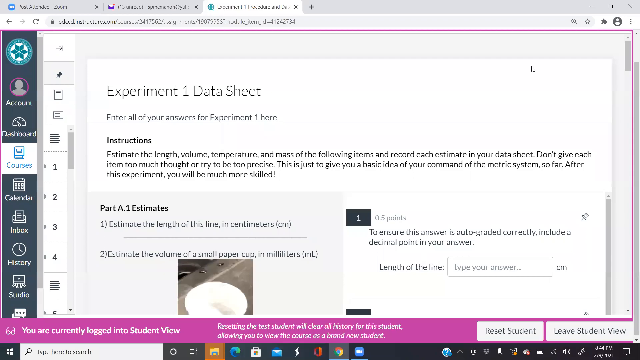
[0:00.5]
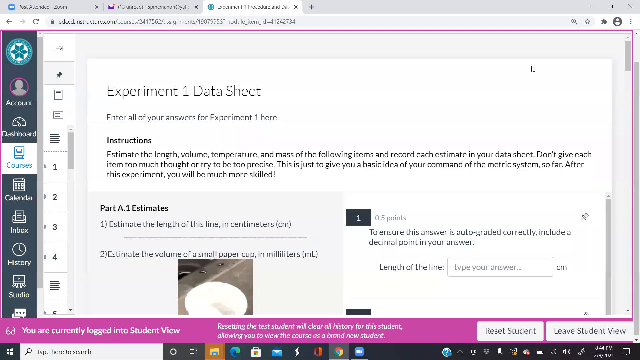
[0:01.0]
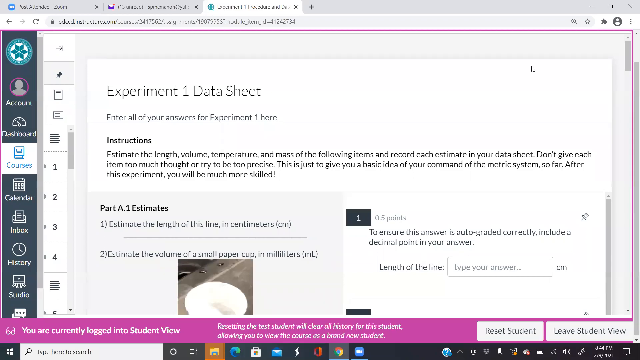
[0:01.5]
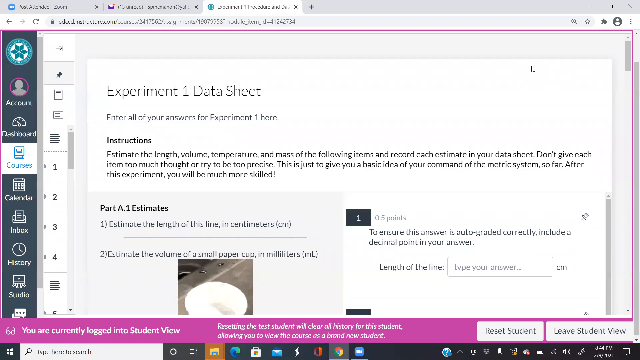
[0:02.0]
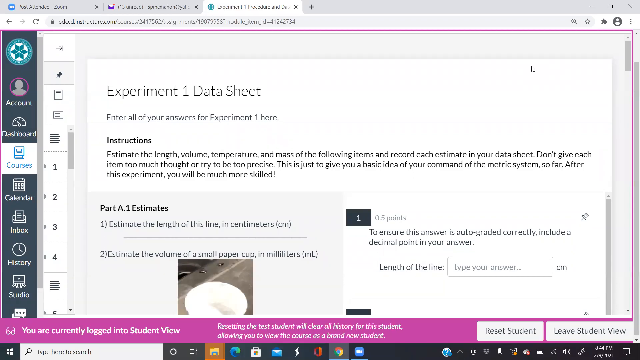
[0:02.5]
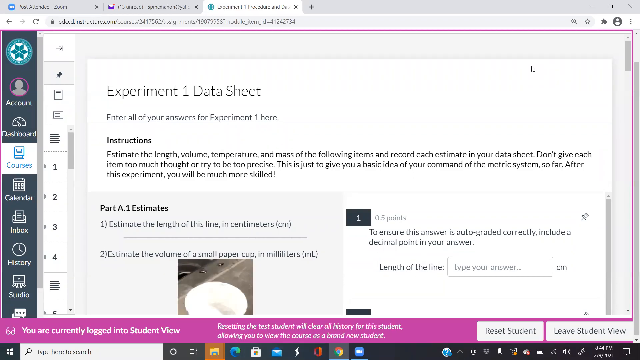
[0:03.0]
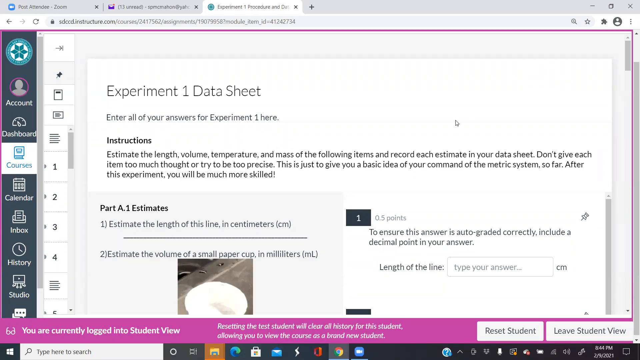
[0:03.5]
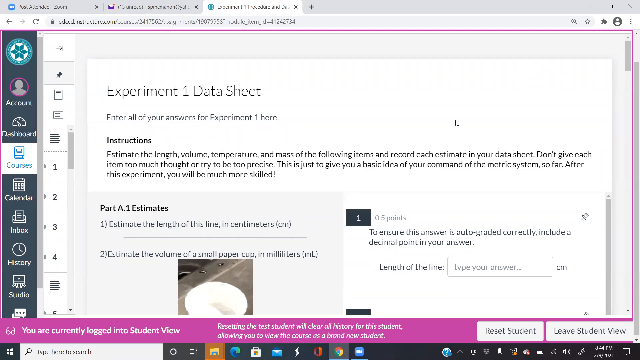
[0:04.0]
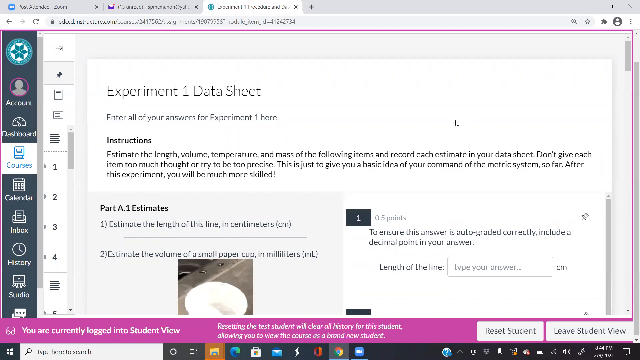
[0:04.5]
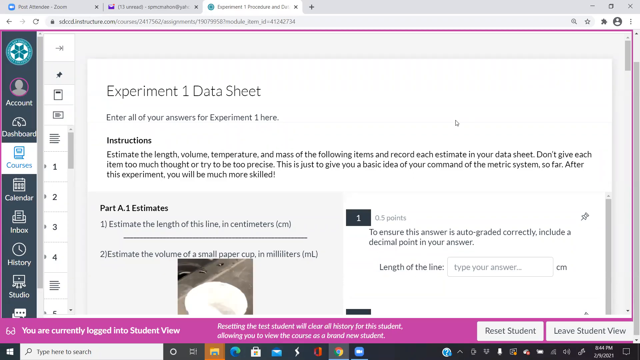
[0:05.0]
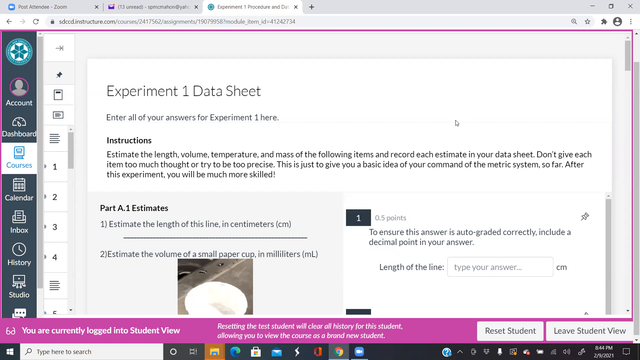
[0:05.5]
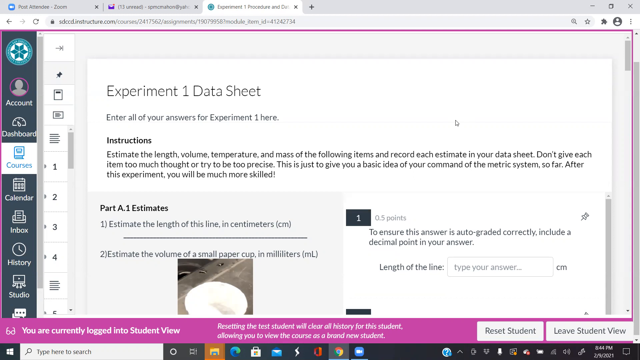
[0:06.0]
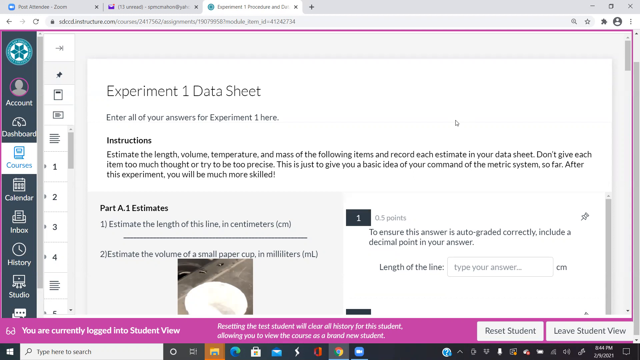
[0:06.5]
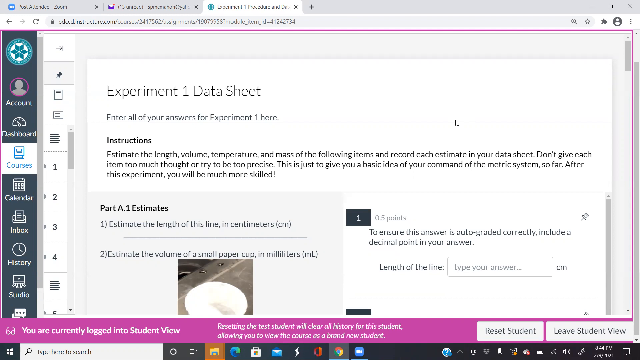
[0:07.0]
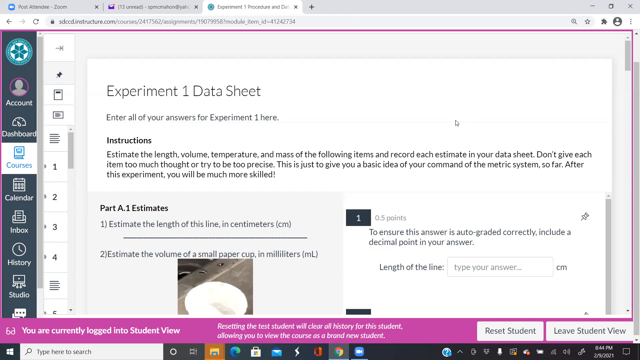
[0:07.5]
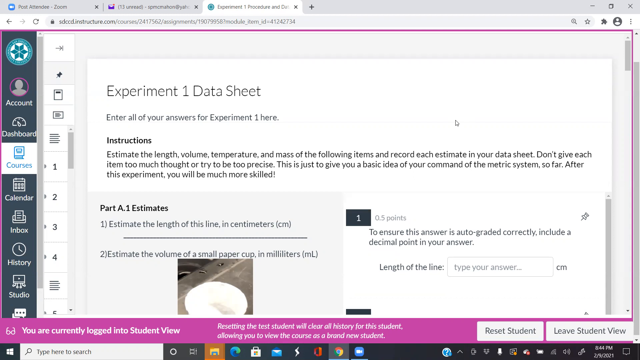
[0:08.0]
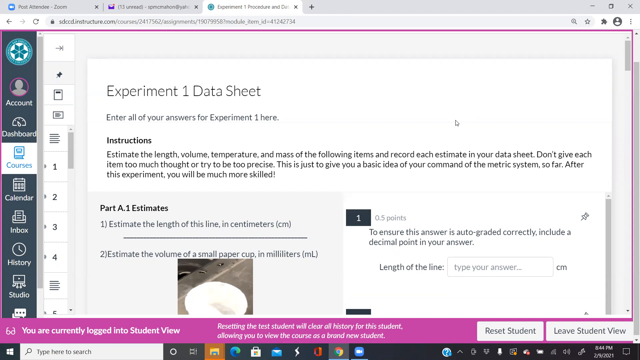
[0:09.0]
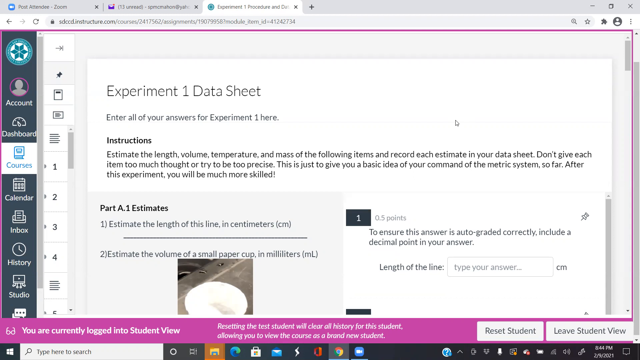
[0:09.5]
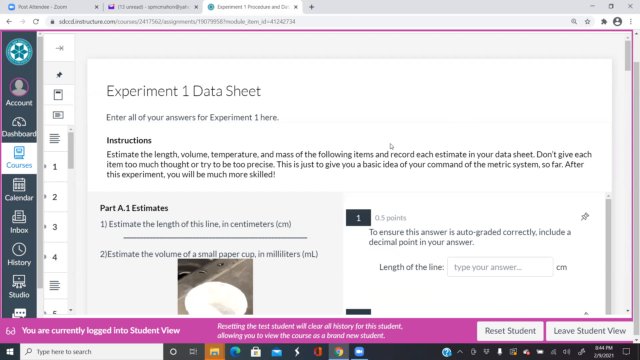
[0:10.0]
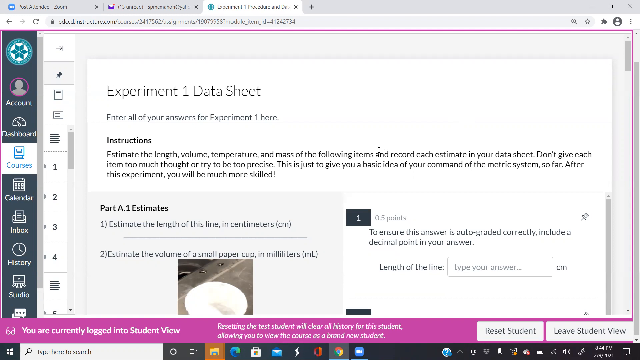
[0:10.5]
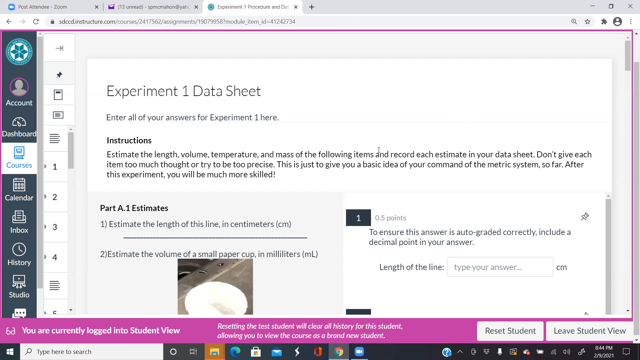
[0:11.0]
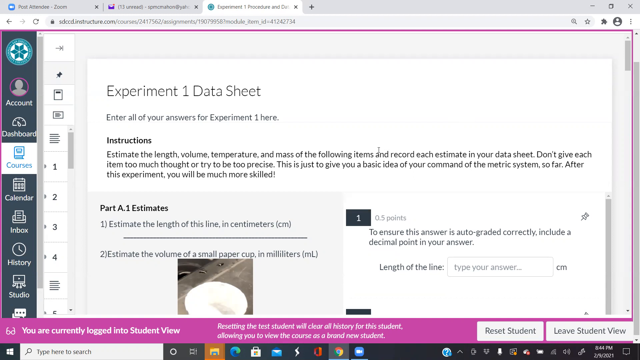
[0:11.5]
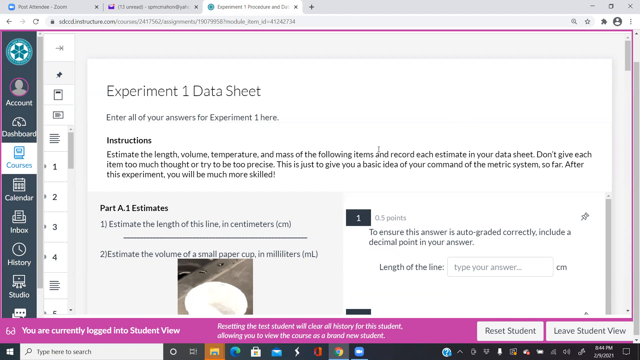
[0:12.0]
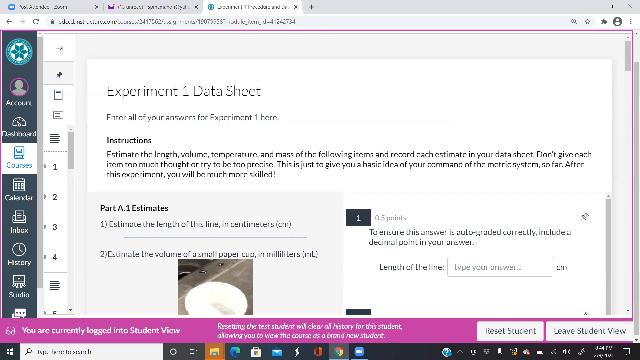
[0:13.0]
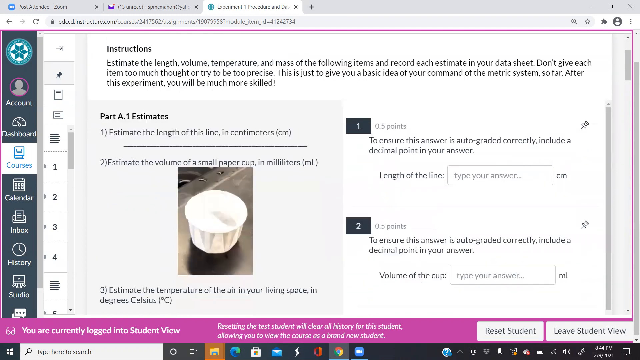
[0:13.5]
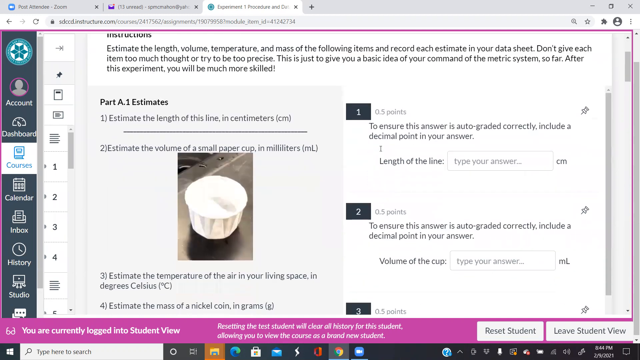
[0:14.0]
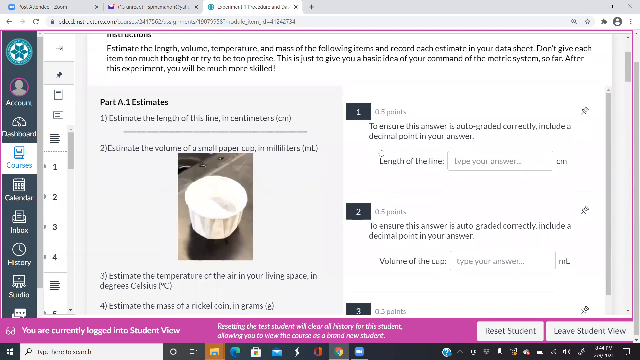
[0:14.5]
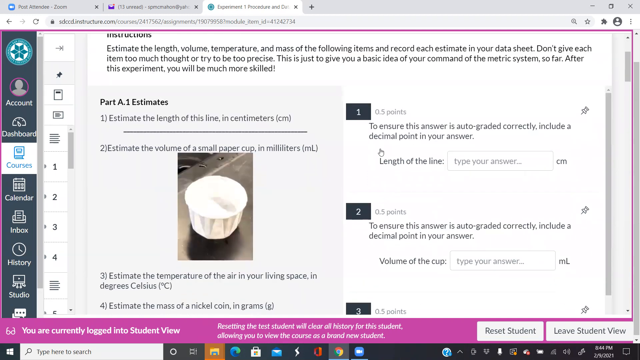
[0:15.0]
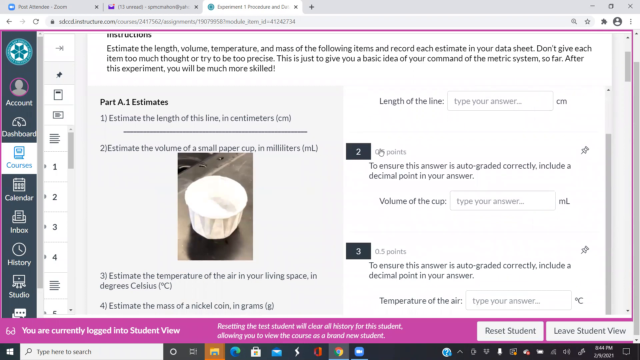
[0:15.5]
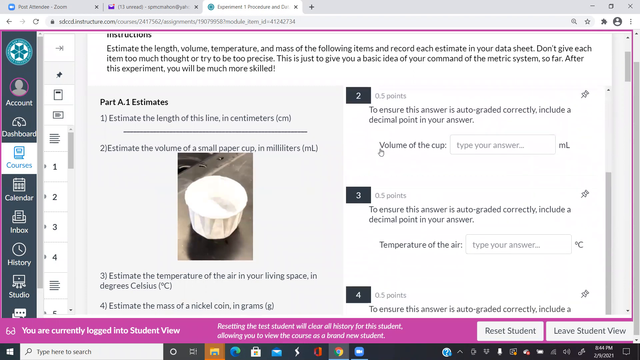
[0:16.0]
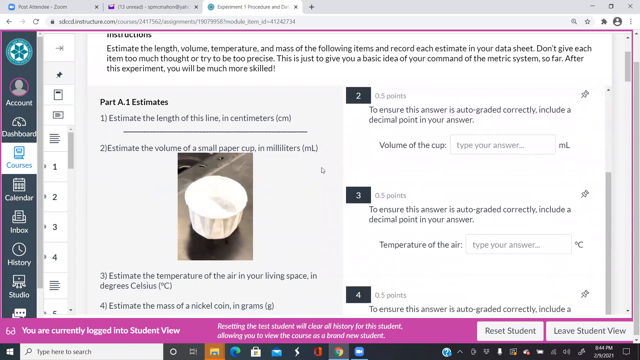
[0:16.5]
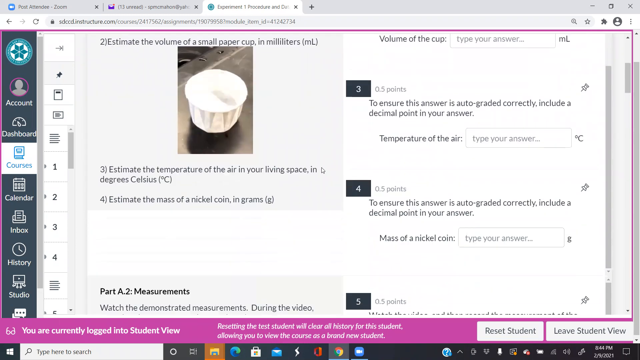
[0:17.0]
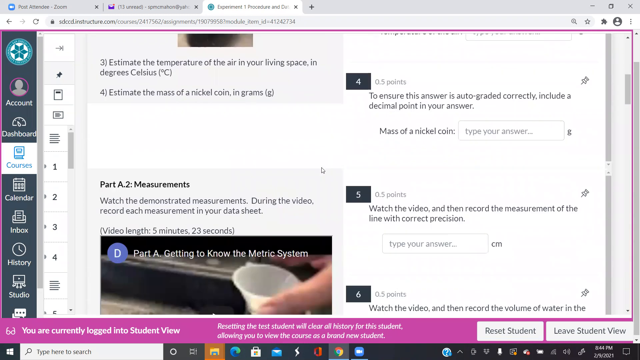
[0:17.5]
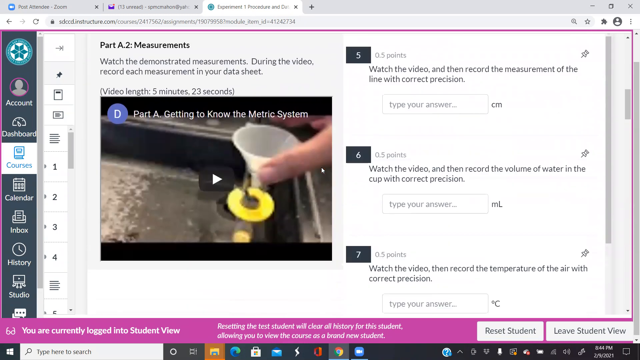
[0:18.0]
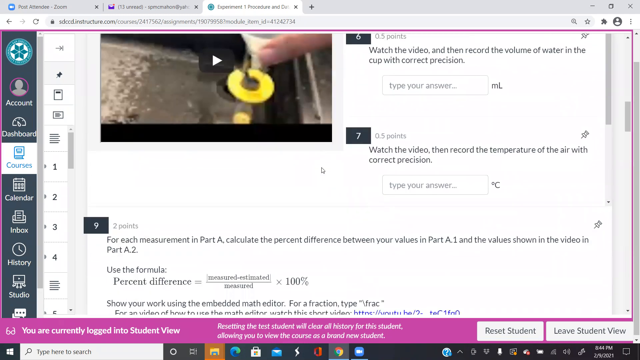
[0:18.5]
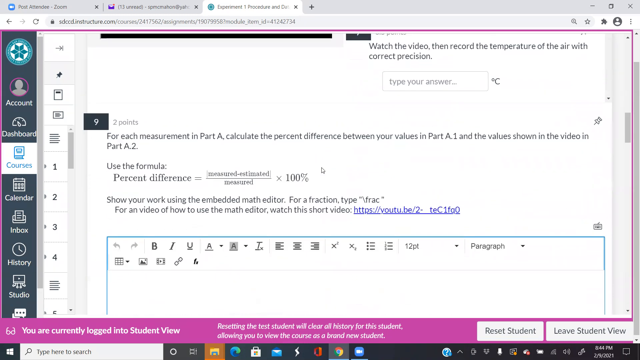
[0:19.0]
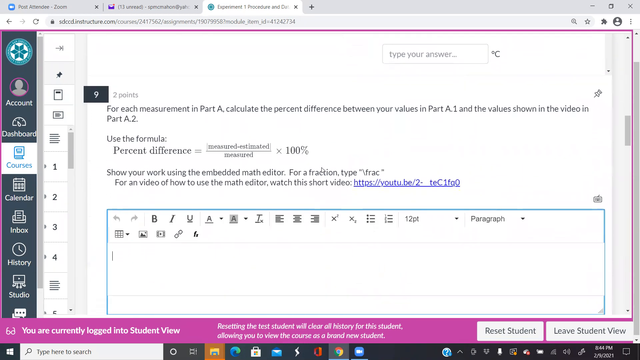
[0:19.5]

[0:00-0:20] A student's assignment is on screen, with the text "Experiment 1. Data Sheet" written on it, followed by questions to be answered. The assignment has two parts: questions on the left and spaces on the right where the questions can be answered. It has to do with estimates. The student is logged in and viewing the data sheet in student mode, accessed via the courses tab. It looks like a math assignment, since calculations are needed. On the left are the student's dashboard and the calendar, inbox, history and tasks tabs. They seem to be logged into the student's account through the school portal. At the bottom of the sheet there is a blank page where the rest of the answers can be filled in.